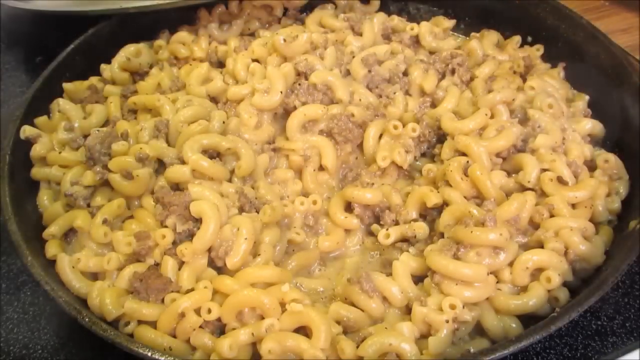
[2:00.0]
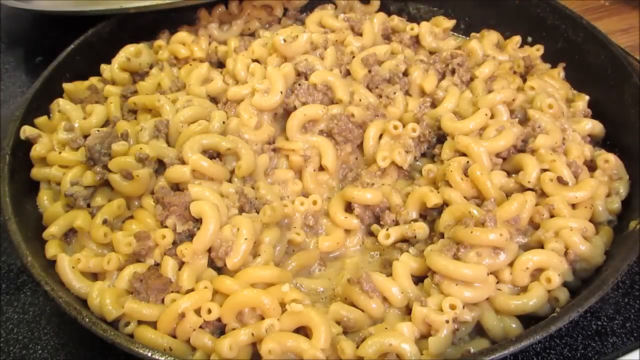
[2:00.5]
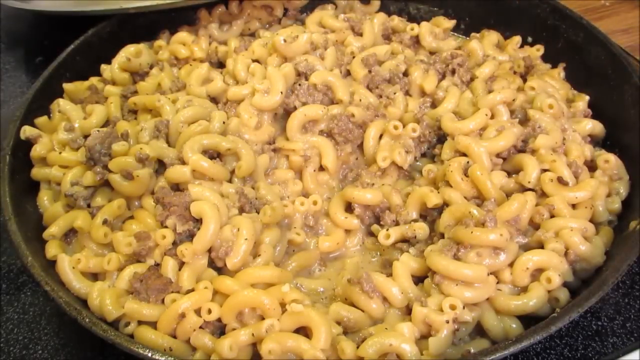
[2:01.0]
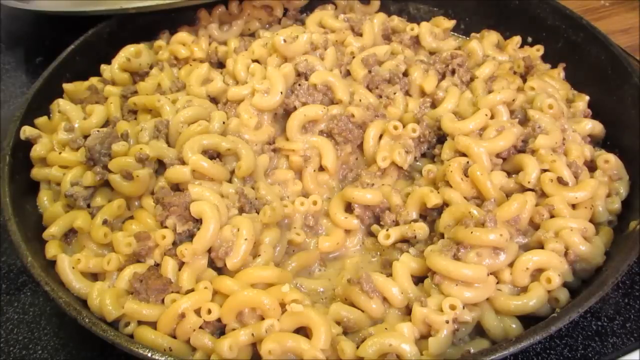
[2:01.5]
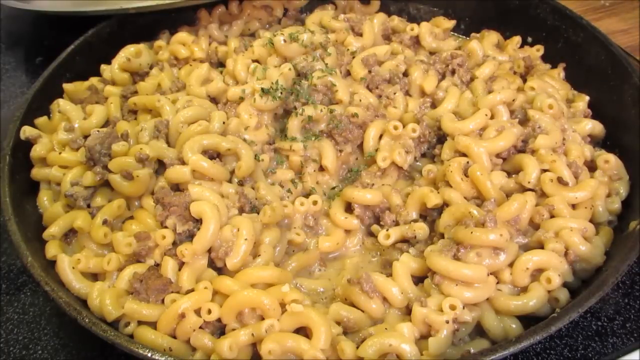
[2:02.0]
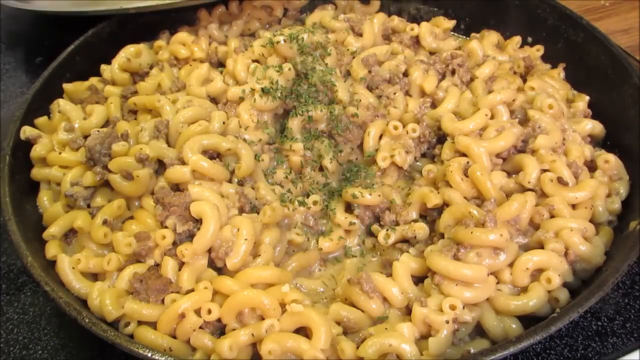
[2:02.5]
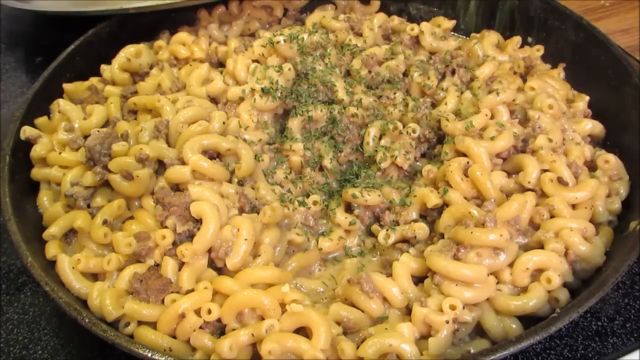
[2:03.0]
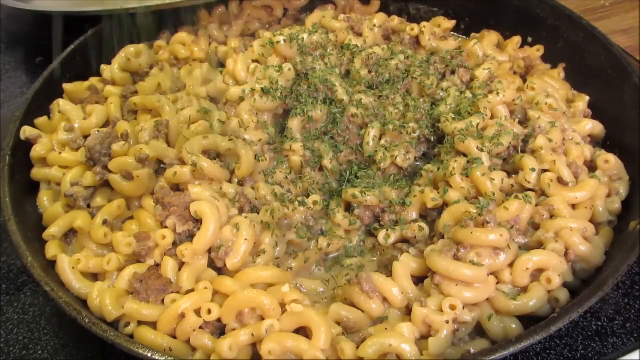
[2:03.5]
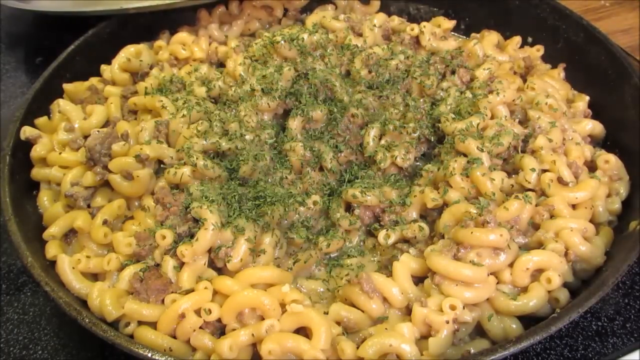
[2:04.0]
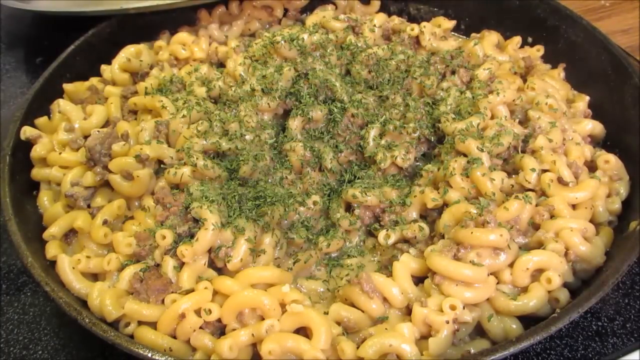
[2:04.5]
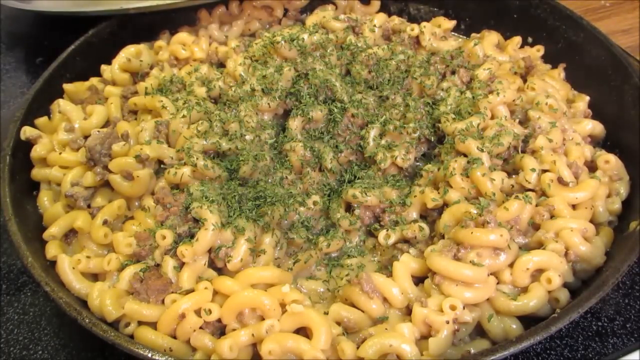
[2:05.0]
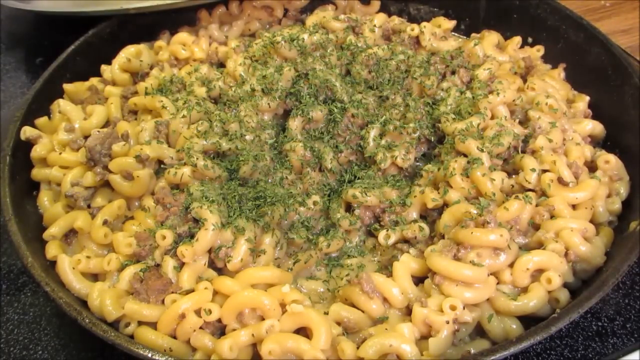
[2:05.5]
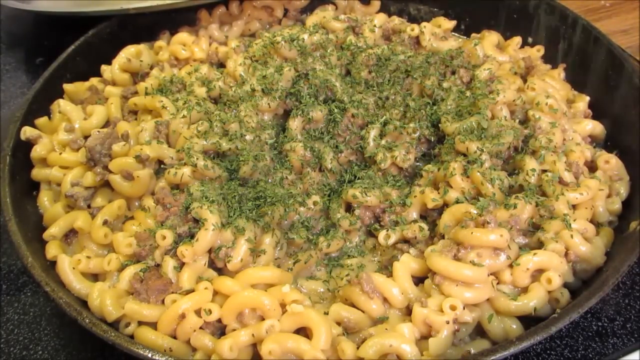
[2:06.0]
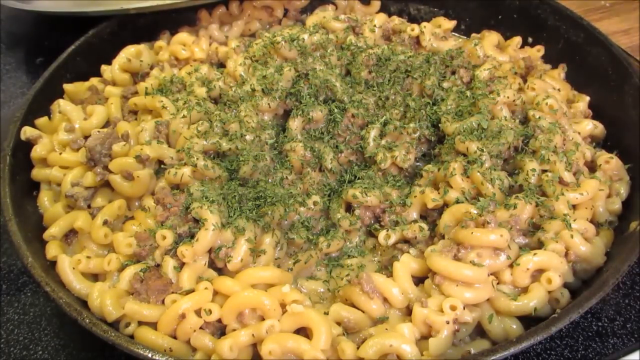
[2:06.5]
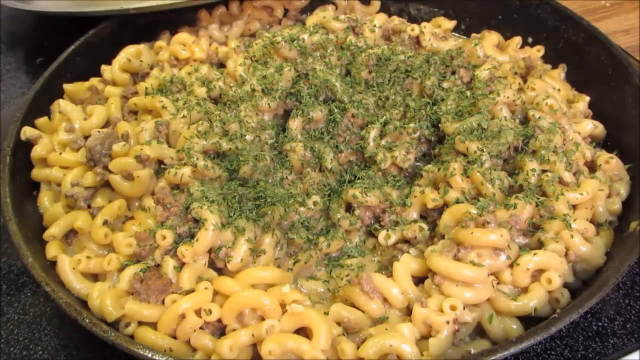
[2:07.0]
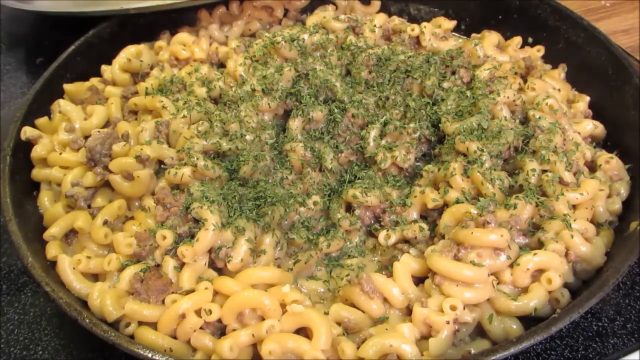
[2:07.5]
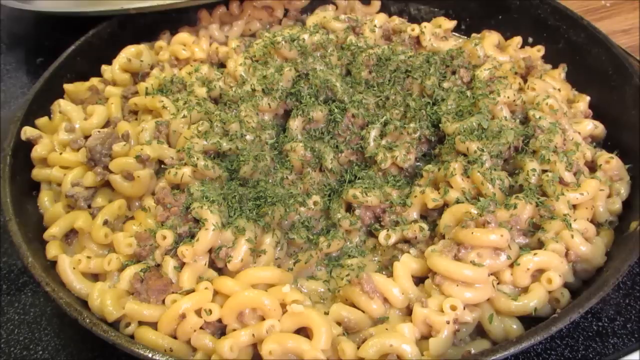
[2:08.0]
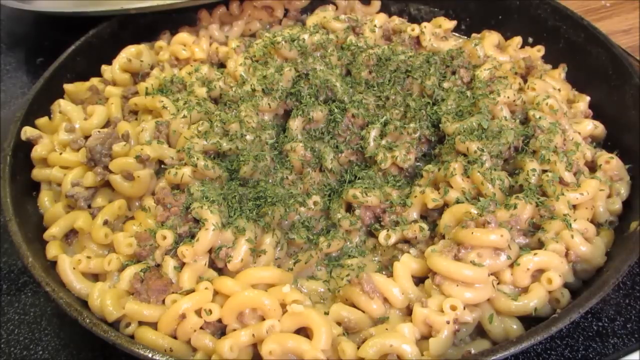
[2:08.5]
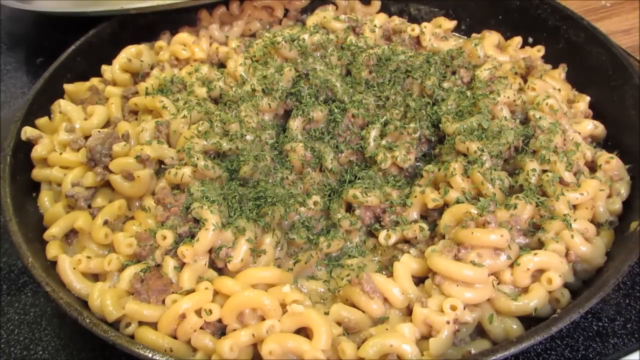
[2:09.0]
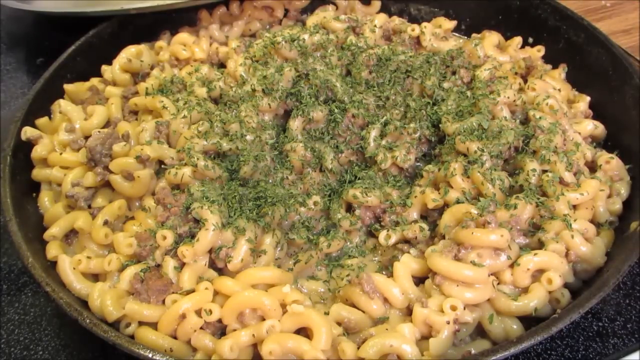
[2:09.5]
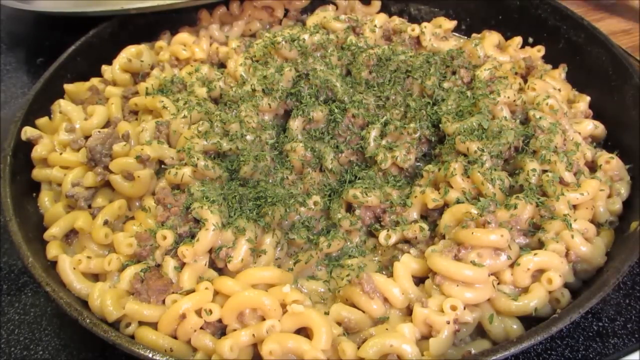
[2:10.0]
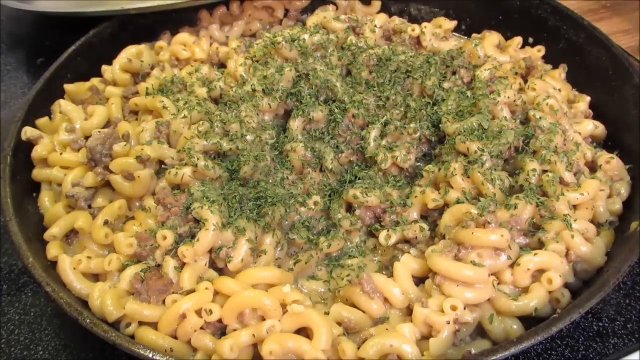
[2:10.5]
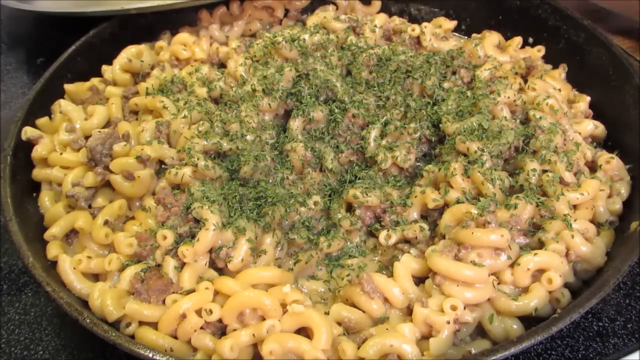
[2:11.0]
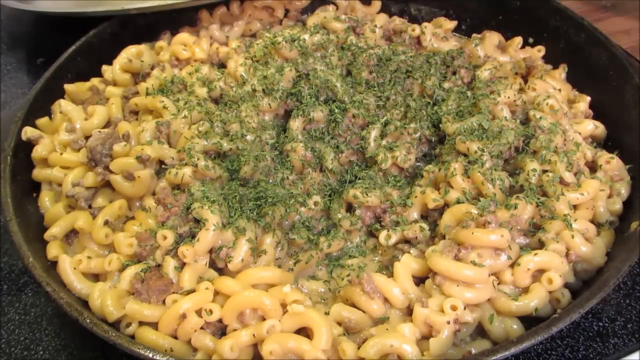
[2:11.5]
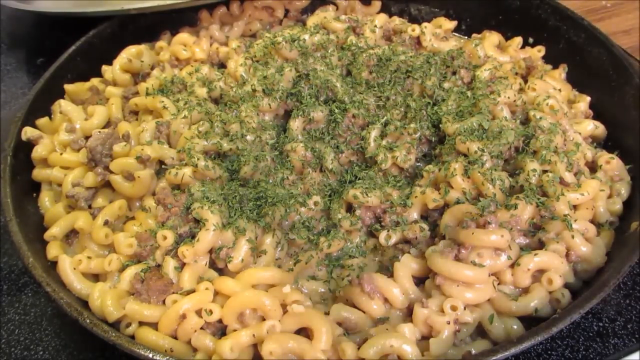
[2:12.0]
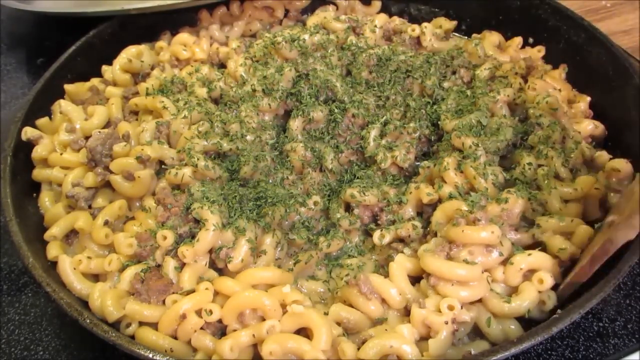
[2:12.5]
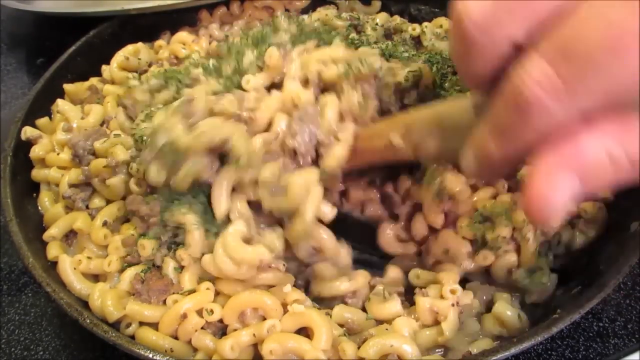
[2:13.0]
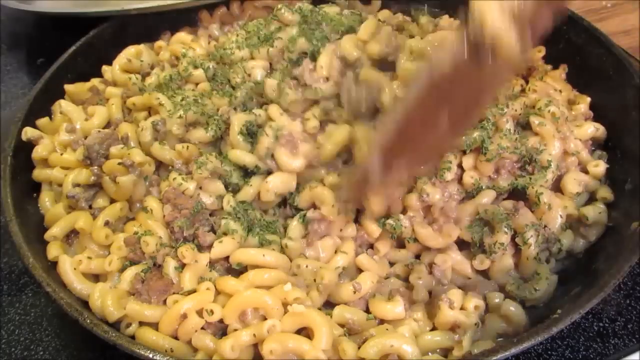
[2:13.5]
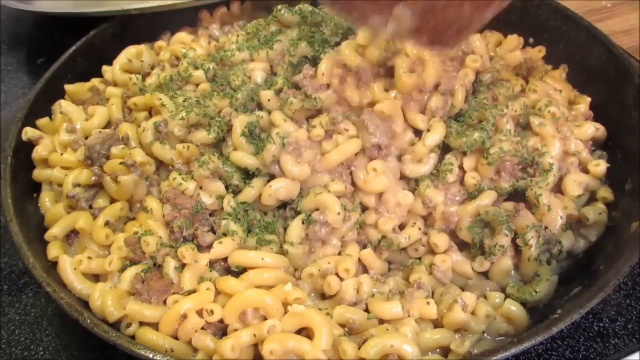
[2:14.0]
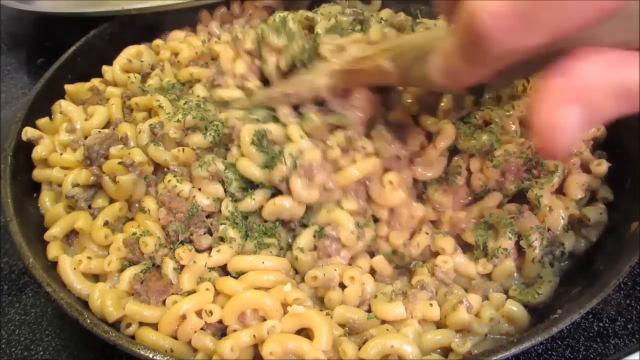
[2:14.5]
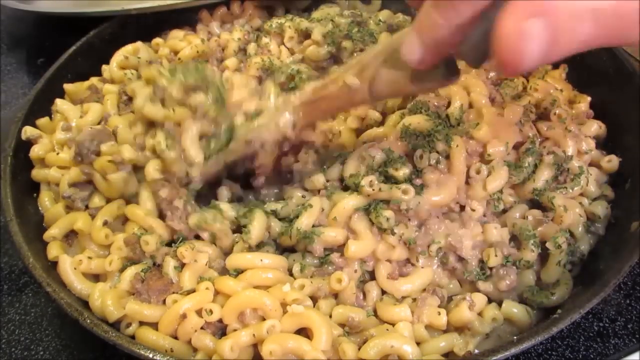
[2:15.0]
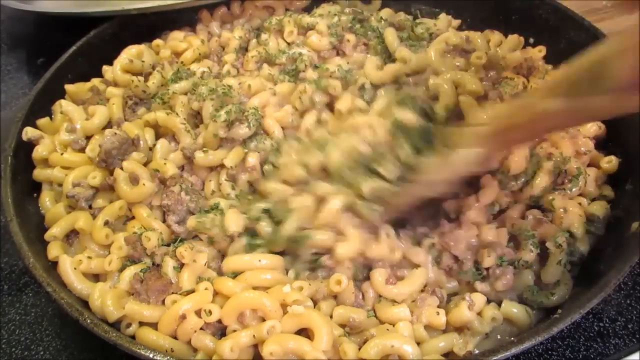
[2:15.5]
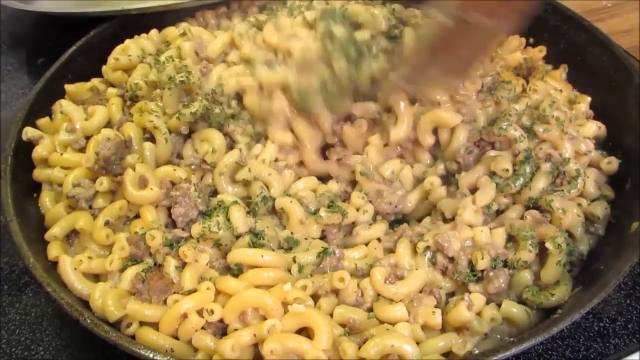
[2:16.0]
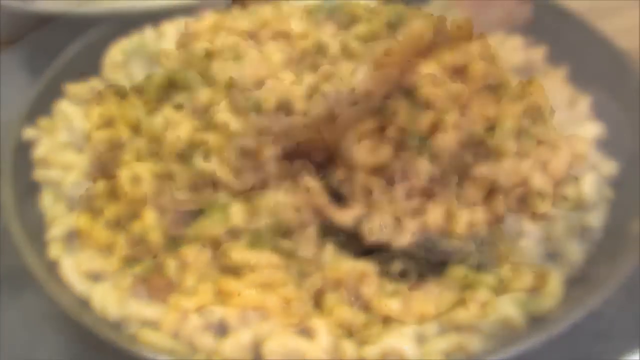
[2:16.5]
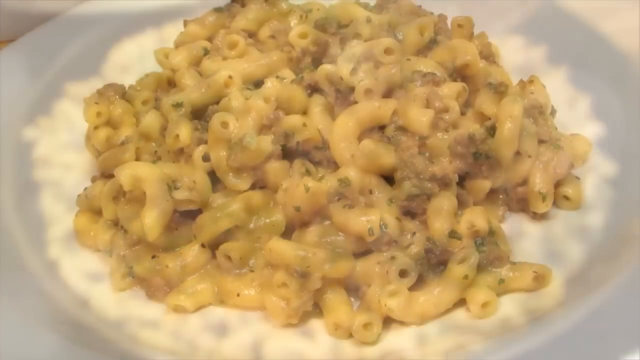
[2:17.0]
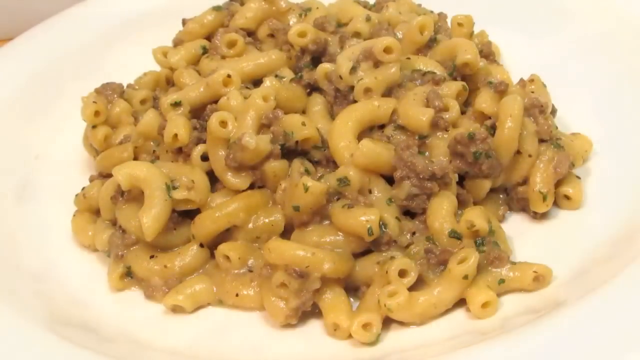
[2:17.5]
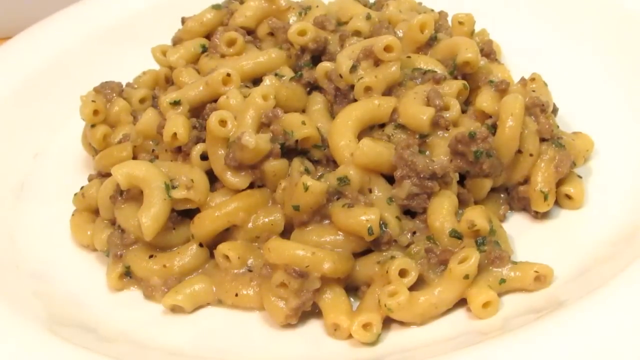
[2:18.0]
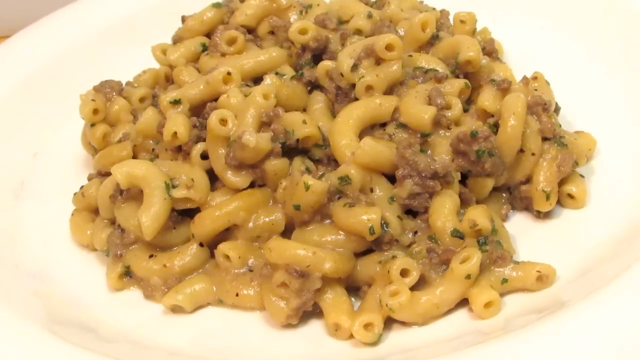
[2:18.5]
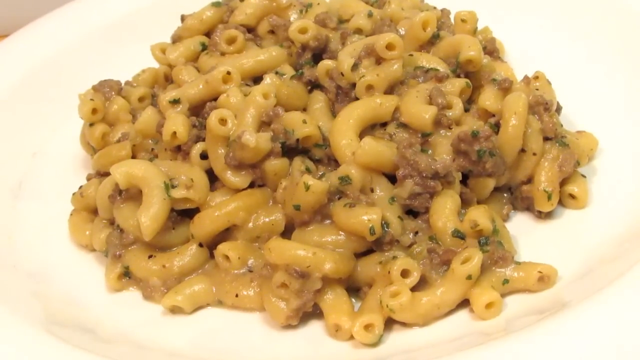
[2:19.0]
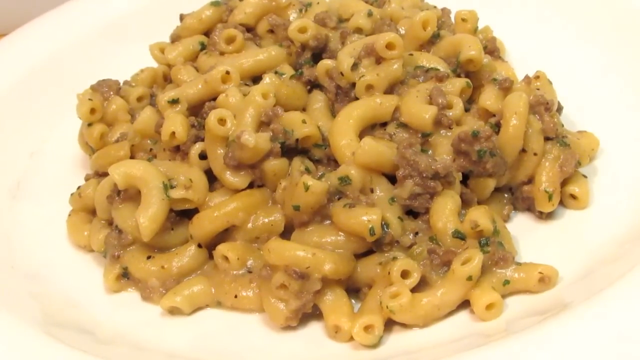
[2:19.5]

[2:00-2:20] The macaroni is almost dry and thick, with the cheese on it, and the sauce is gone. While it is in the pan on the stove, she sprinkles a lot of green spice, covering the top of the macaroni and cheese, then mixes it in. She then takes a wide, small plate and dishes out some of the macaroni; the green spice is still visible. The wide, clean plate is on the side. Only hand movements are visible. The macaroni and mince look thick and sticky.